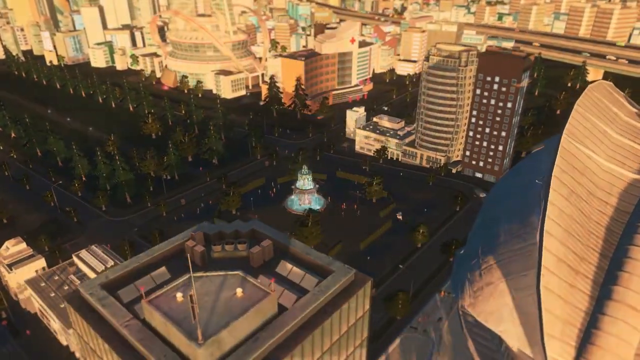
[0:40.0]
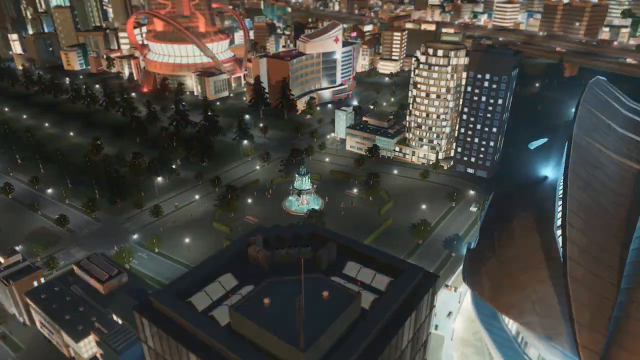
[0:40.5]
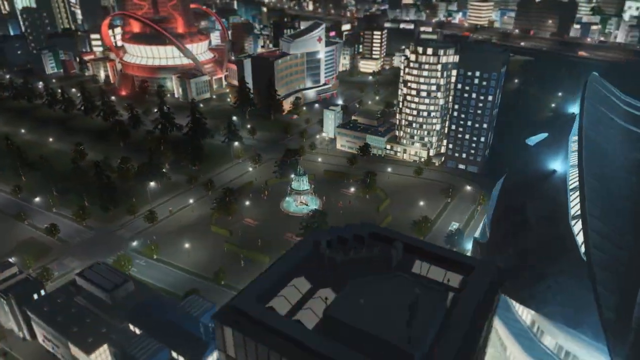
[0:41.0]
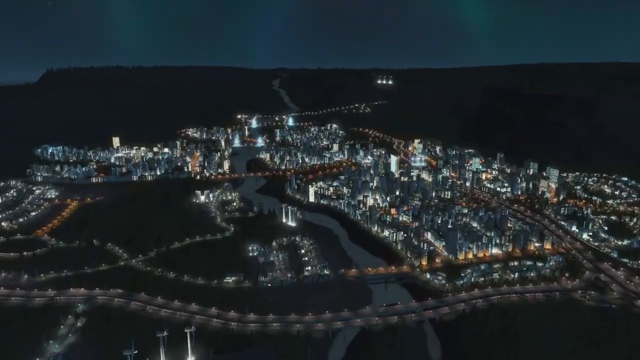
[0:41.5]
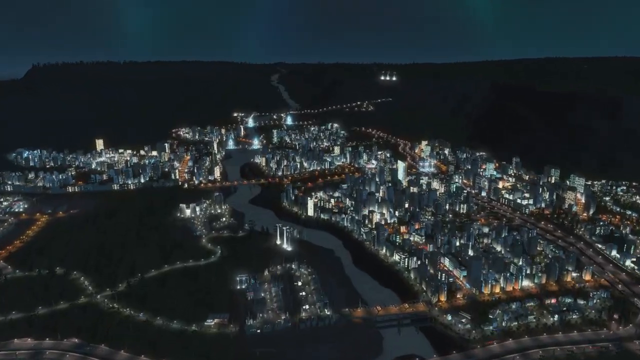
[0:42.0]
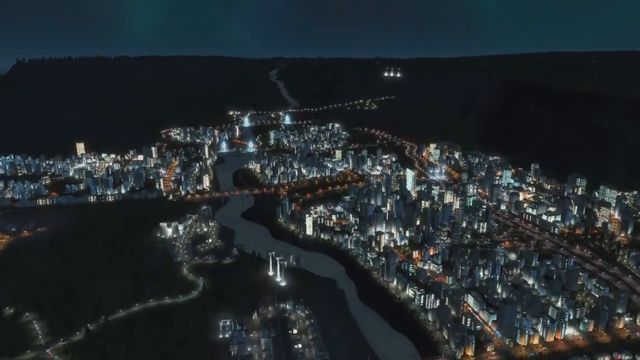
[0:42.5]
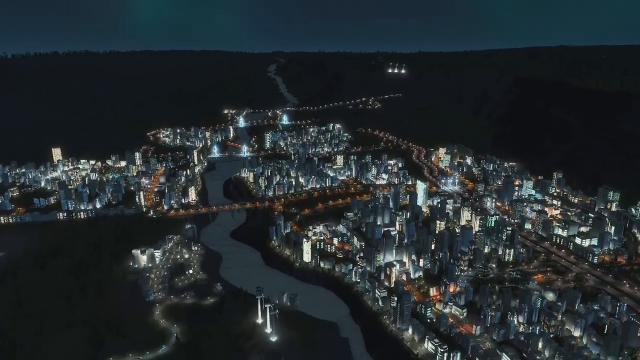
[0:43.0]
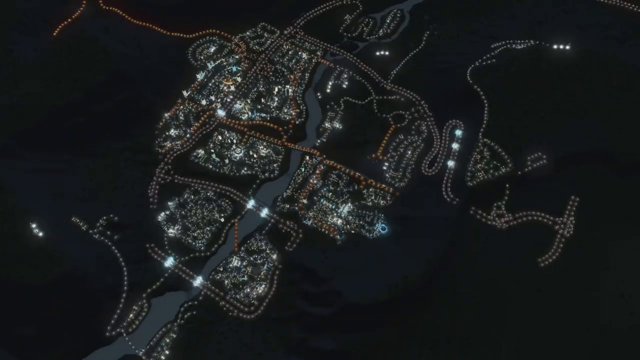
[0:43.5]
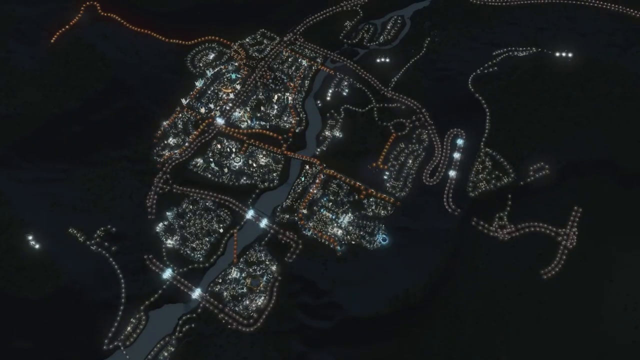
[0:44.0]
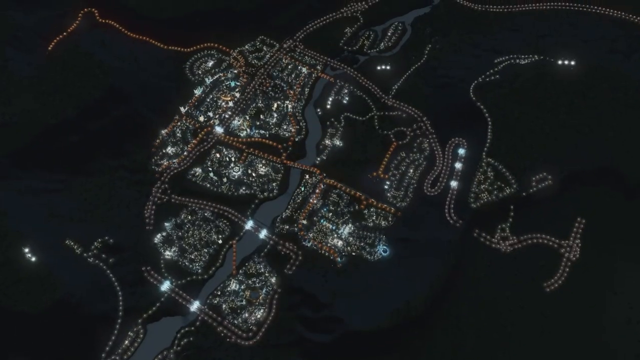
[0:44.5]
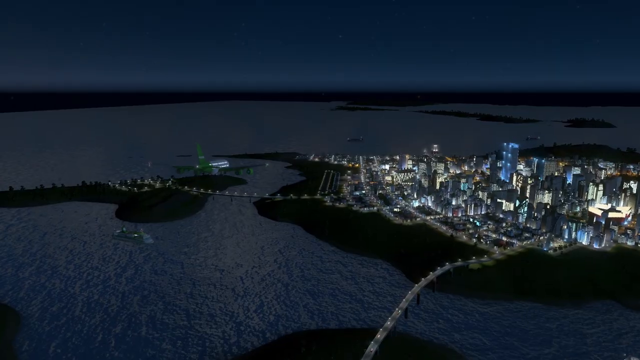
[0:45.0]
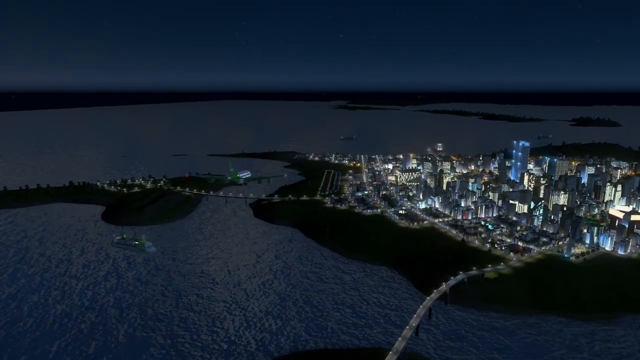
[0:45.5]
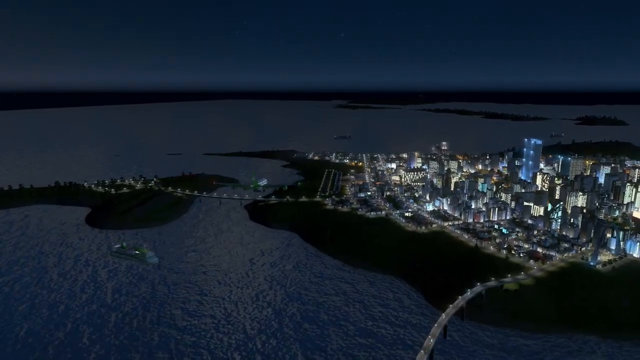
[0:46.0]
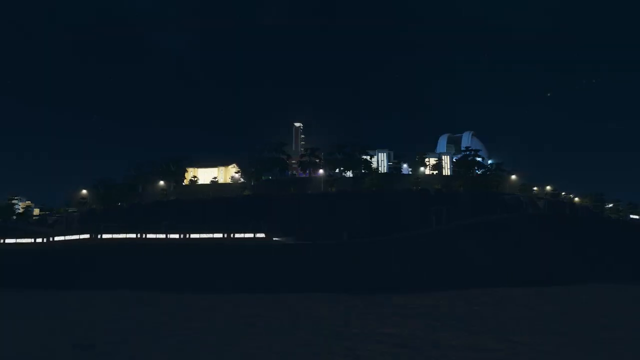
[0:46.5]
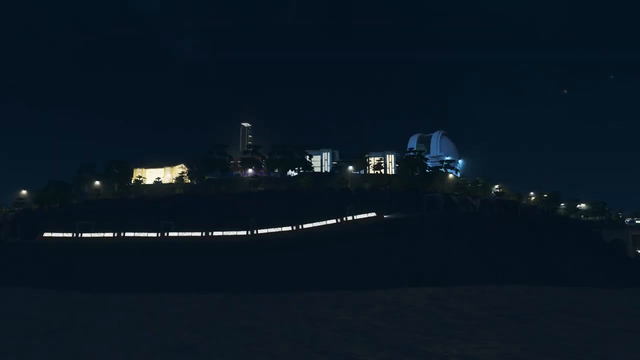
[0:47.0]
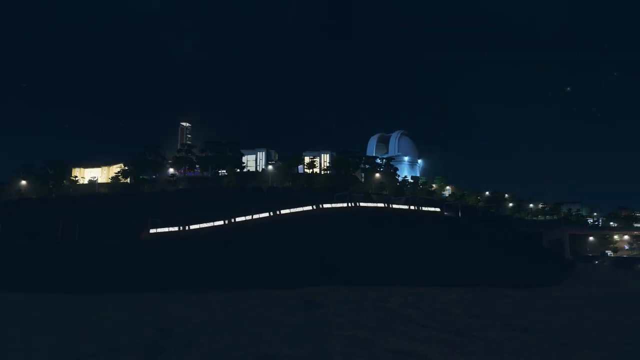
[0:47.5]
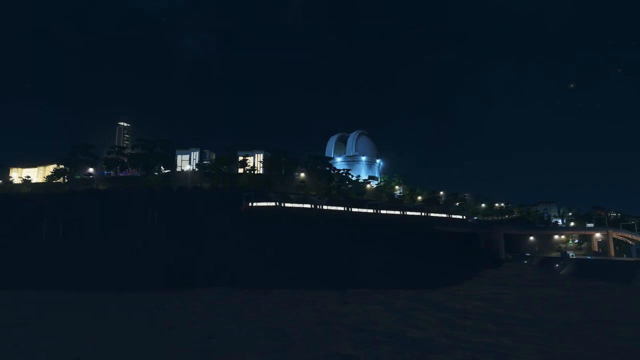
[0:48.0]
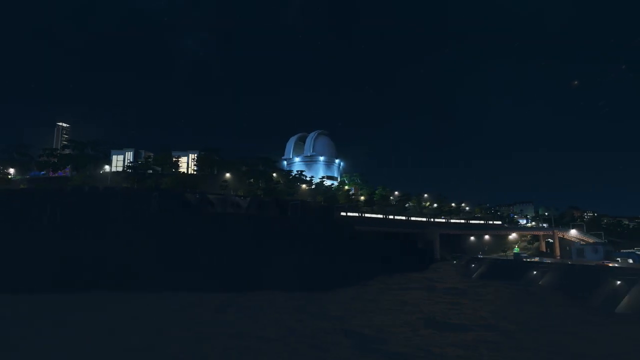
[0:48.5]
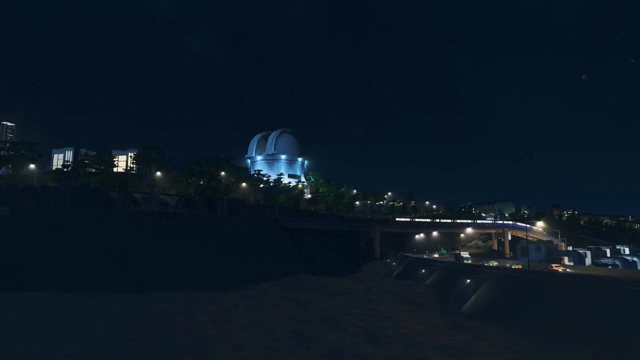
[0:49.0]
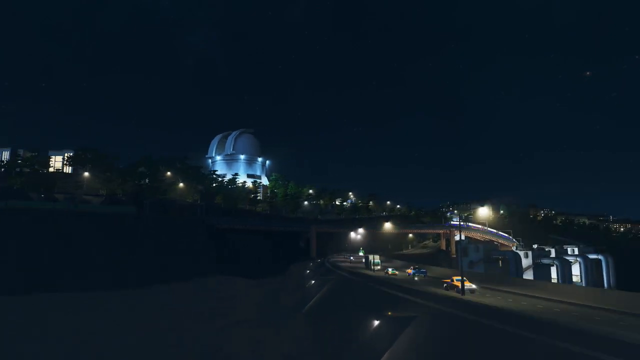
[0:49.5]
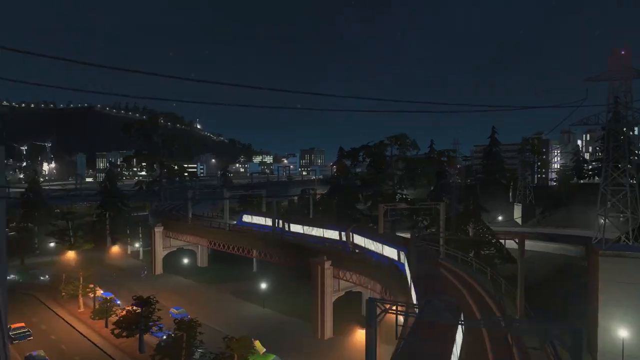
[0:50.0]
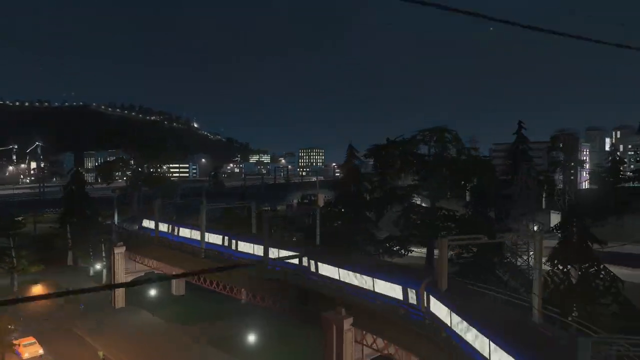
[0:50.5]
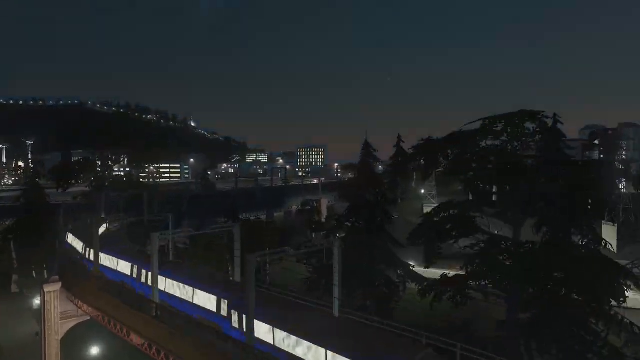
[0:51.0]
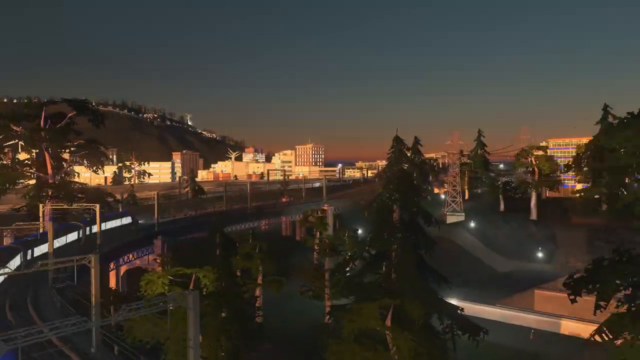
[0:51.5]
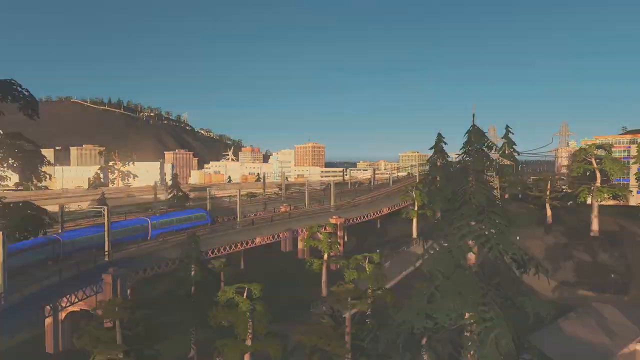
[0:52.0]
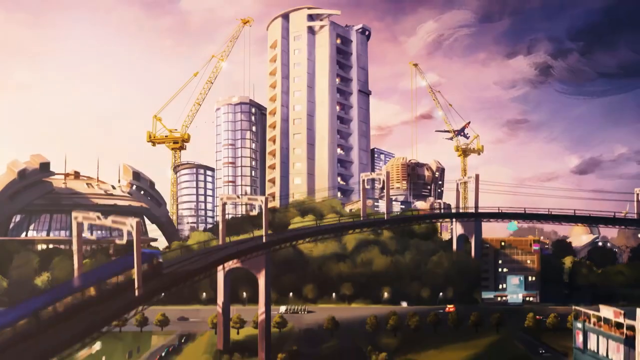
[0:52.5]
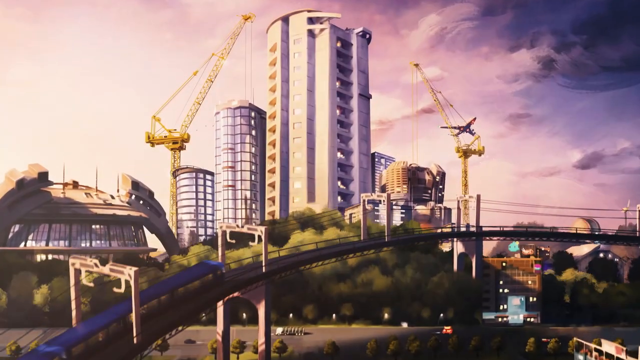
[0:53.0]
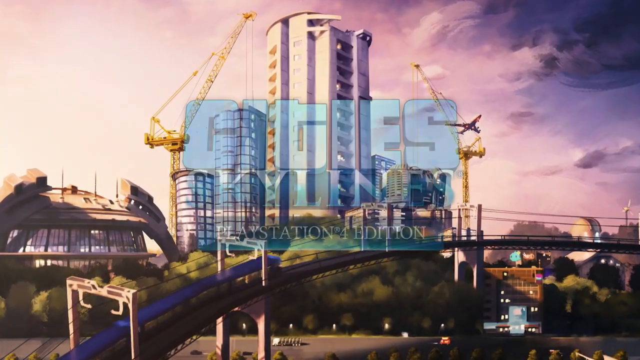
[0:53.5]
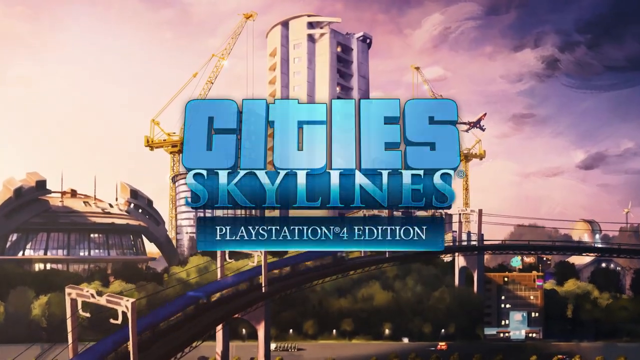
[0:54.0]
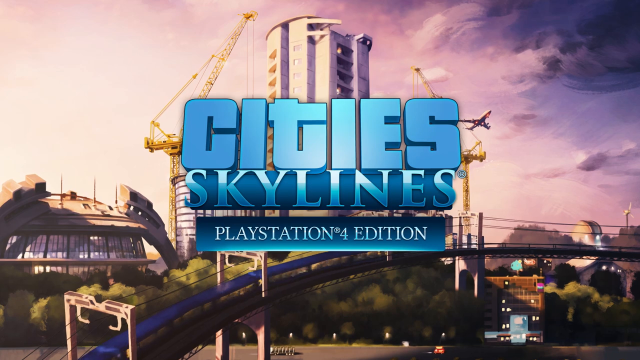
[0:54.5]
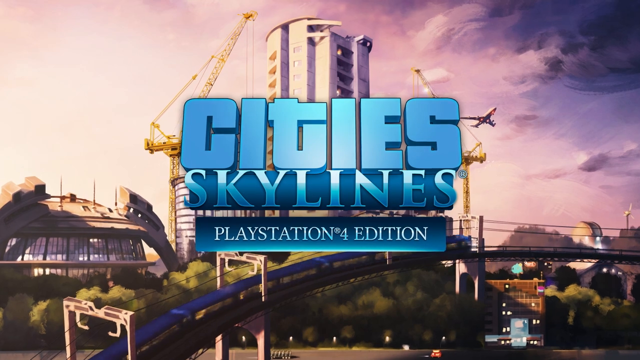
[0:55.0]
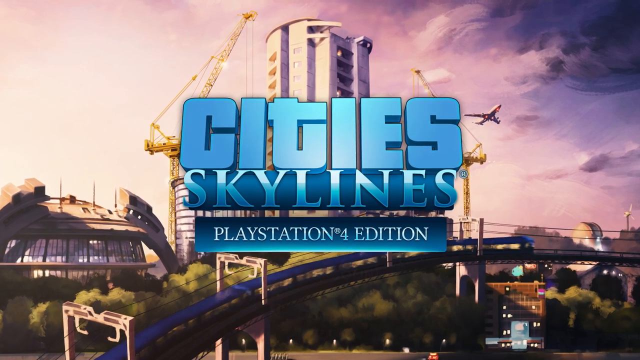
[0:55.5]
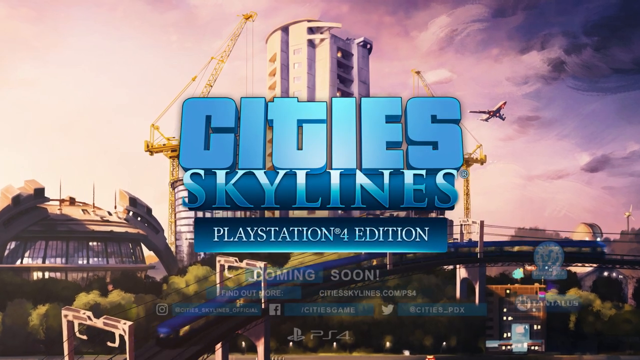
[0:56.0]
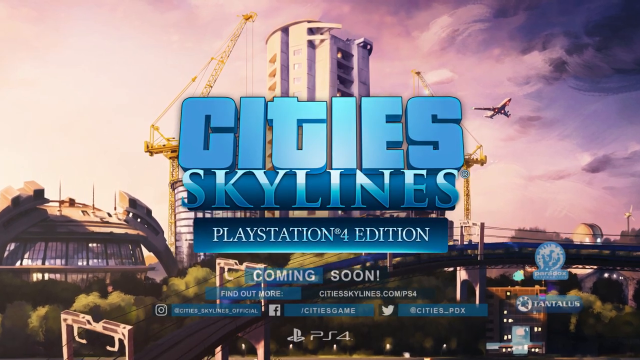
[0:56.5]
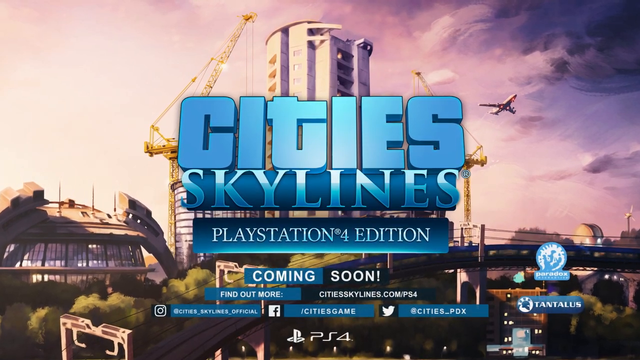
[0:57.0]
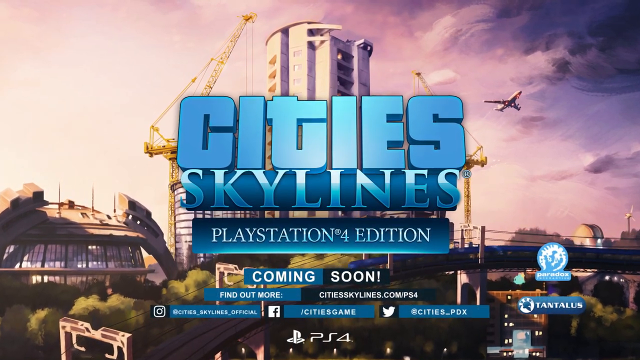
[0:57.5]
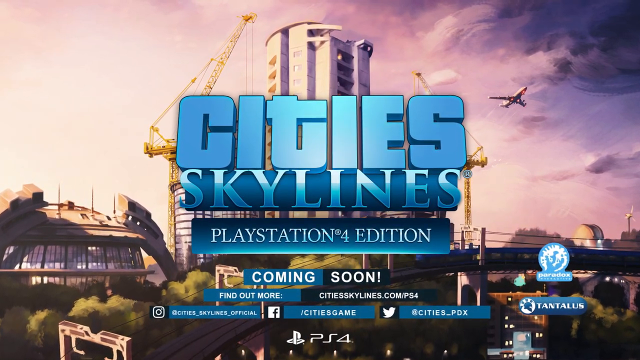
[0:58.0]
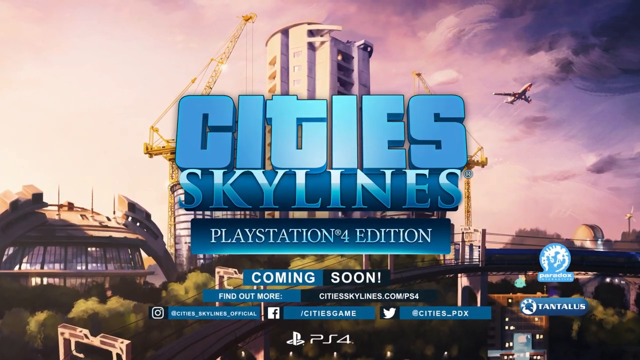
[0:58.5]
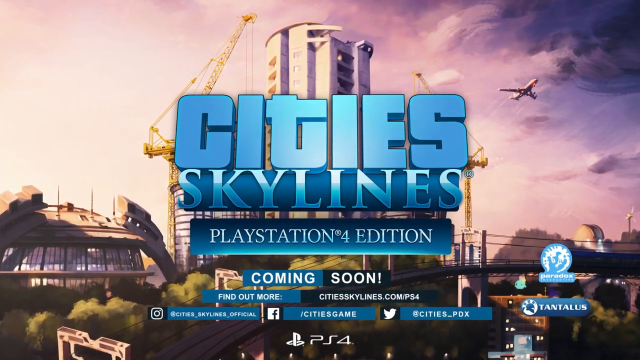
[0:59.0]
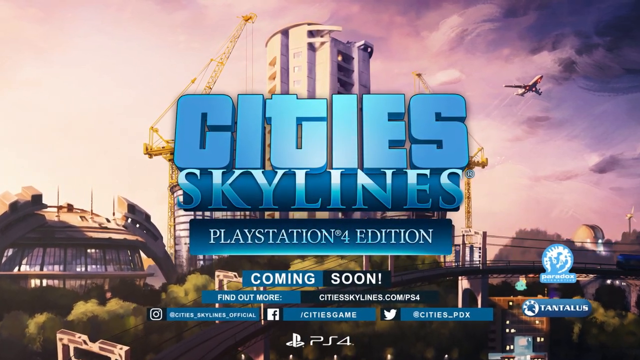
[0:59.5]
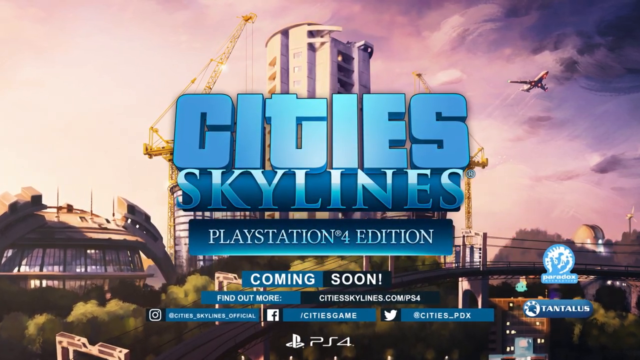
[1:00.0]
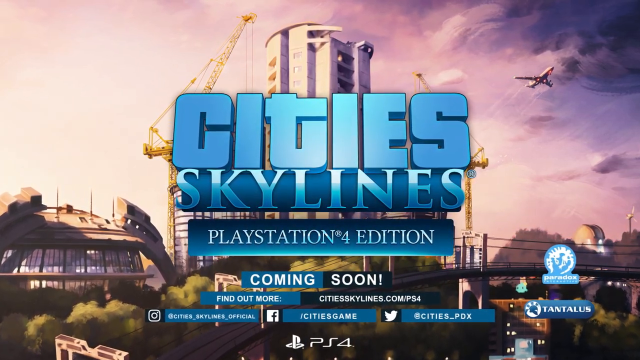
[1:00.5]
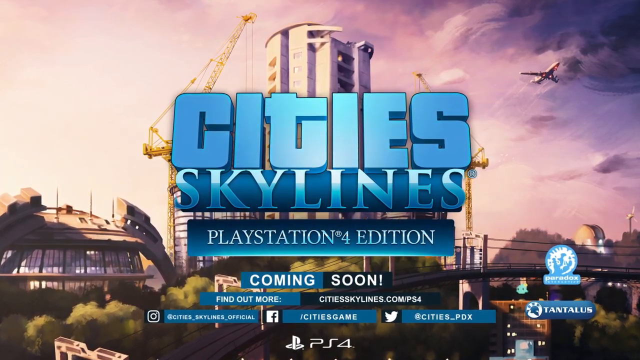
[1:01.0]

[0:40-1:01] A very dark sky that kind of looks like nighttime stretches over quite a lot of dark mountains in the distance, with a full aerial view of a city at night lit up by a lot of lights. The camera slowly hovers over the city. Another view shows the same city from a distance; the whole city looks like it's made up of lights, with some larger circular lights at the top right. The camera gets slower as it goes over the city, then the view changes to an airplane in the sky going close to the city. Another scene shows a dark city with a bunch of lights almost in a string formation, and buildings and houses that light up with trees surrounding them. Next is a large building with big white-bluish lights on its side, then a train going across, kind of over the top of a road with a bunch of traffic driving down it. A close-up view follows the train, which has lights throughout it. The scene changes over to daylight, showing a bunch of buildings and some cranes, before blue text on the screen says "CitySkylines PlayStation 4 edition" while the train continues to go. Text then says "coming soon", "find out more", "cityskylines.com" and "PS4", along with Twitter, Instagram and Facebook information.